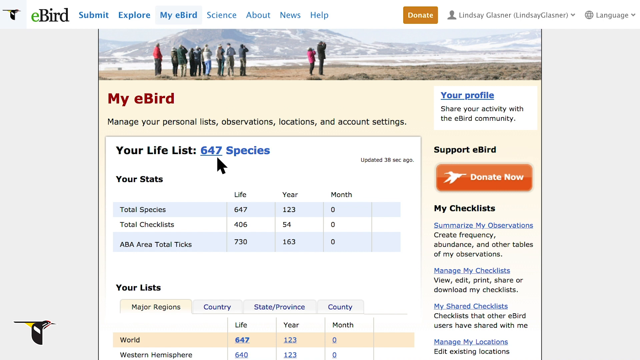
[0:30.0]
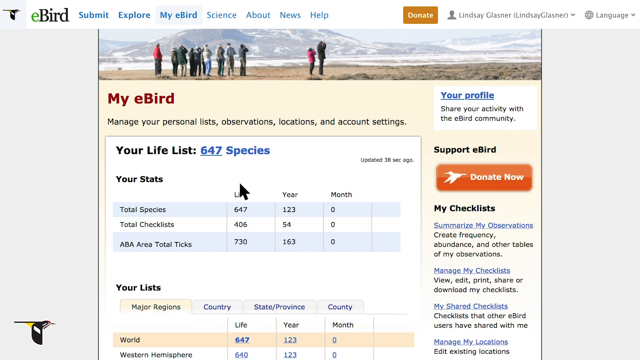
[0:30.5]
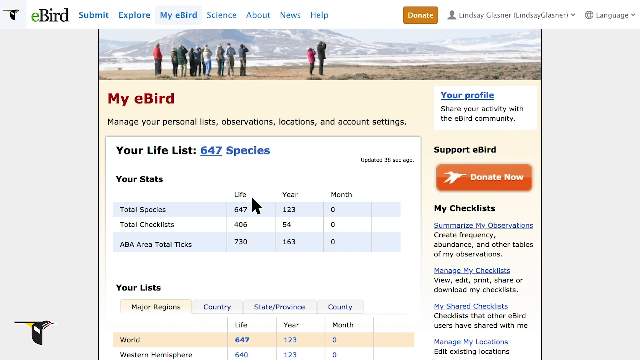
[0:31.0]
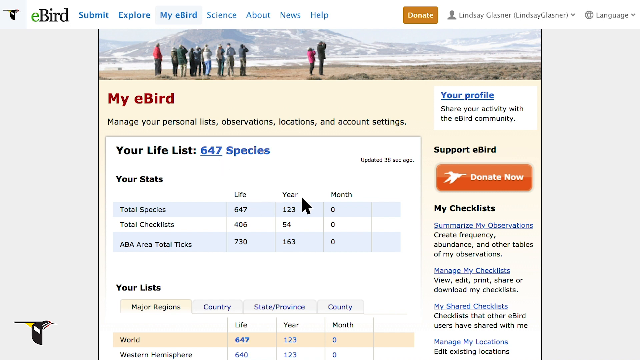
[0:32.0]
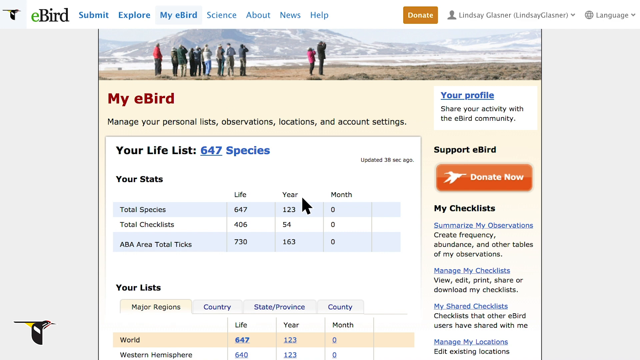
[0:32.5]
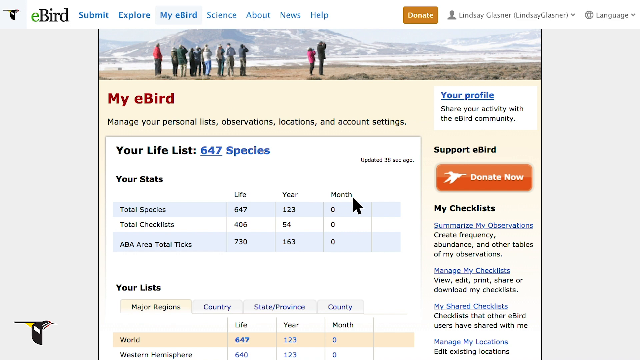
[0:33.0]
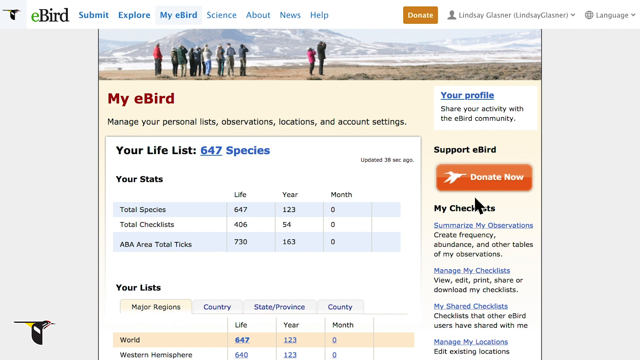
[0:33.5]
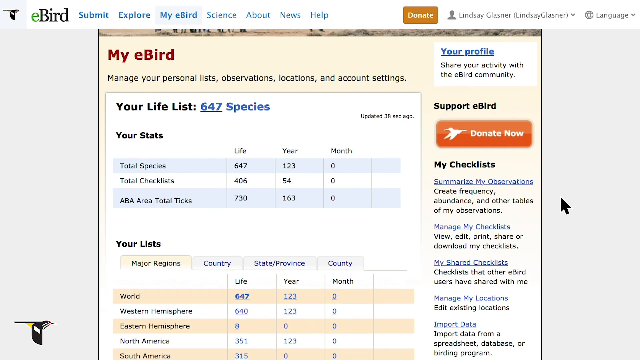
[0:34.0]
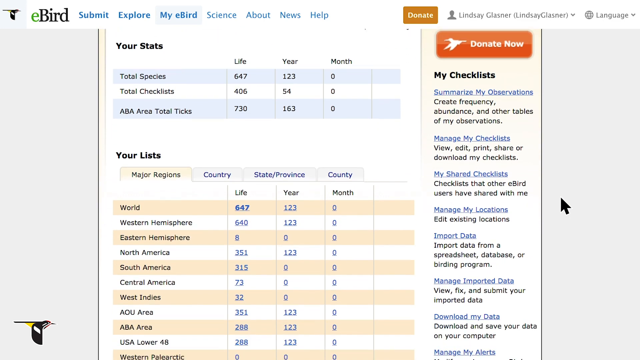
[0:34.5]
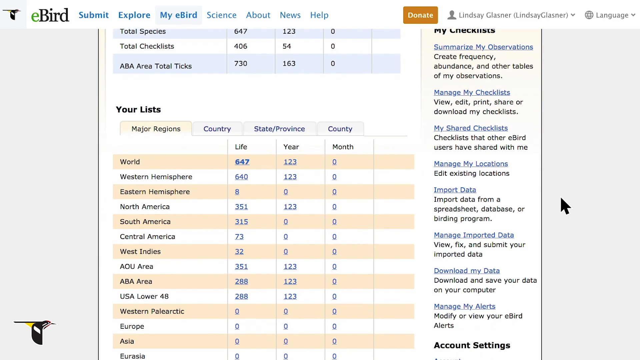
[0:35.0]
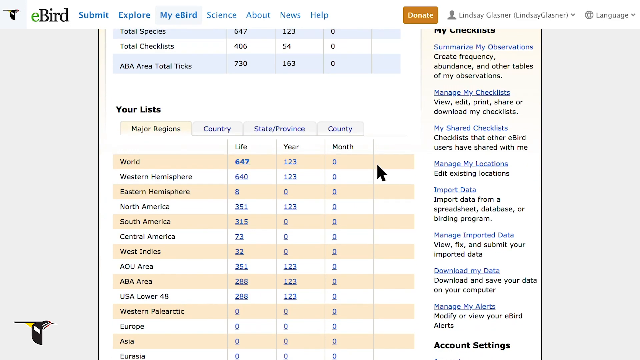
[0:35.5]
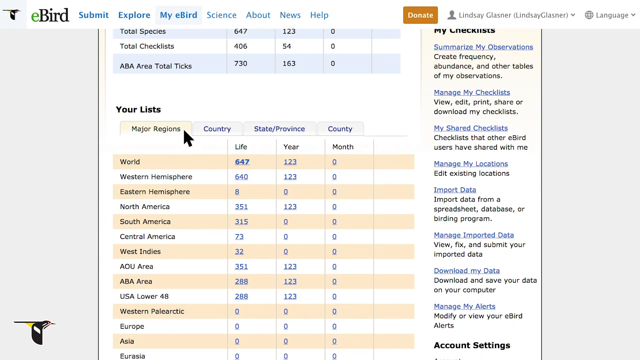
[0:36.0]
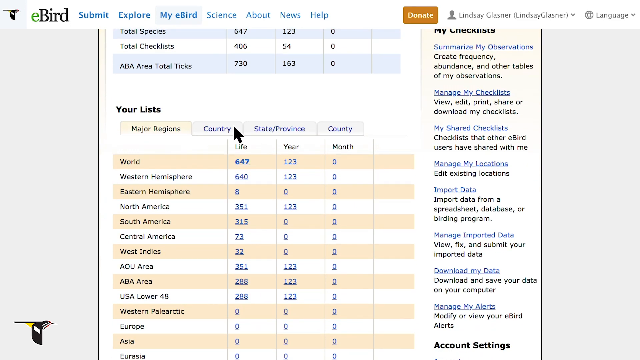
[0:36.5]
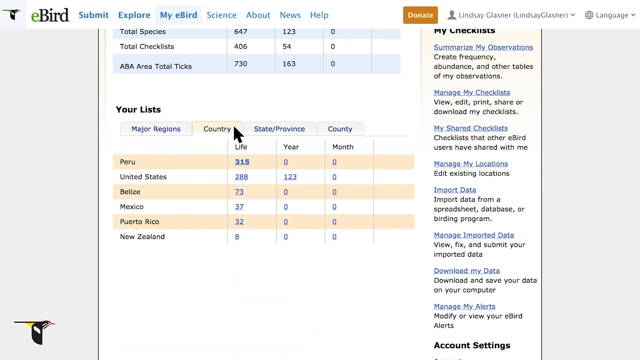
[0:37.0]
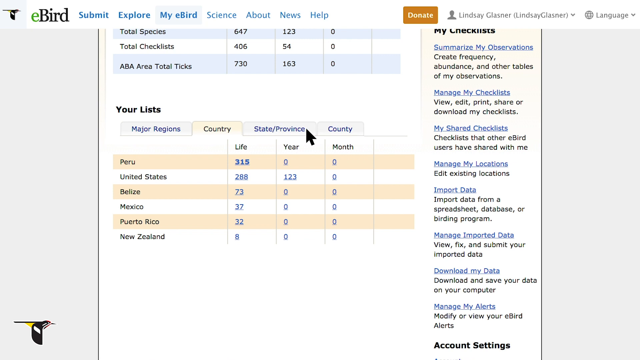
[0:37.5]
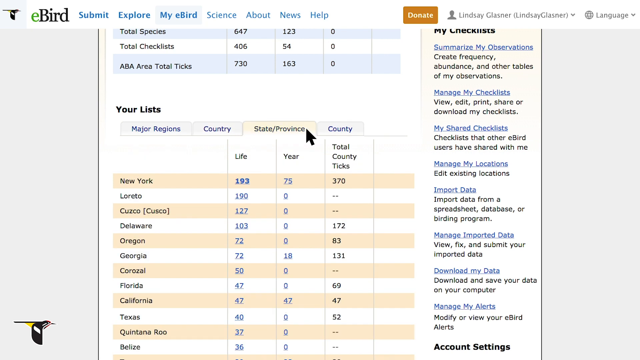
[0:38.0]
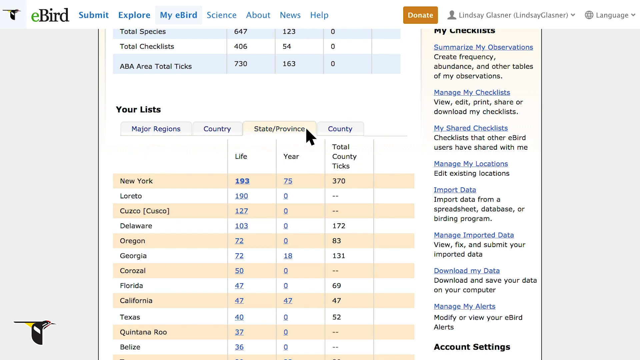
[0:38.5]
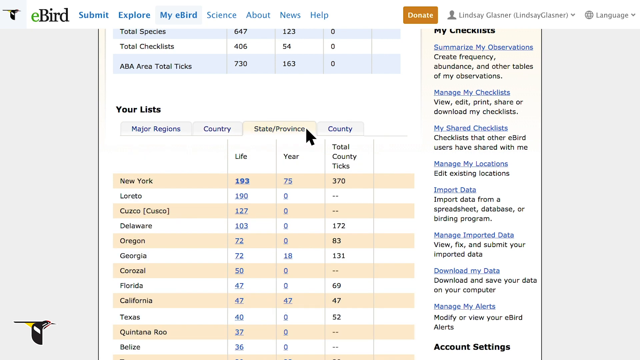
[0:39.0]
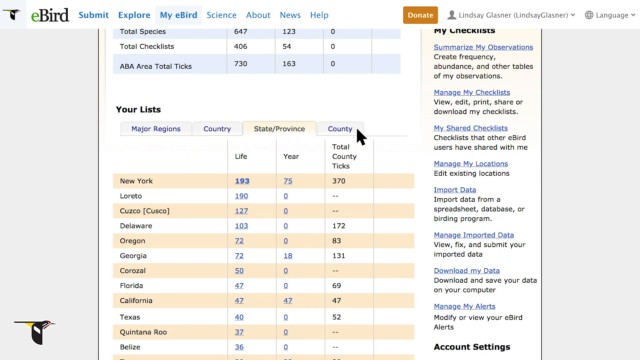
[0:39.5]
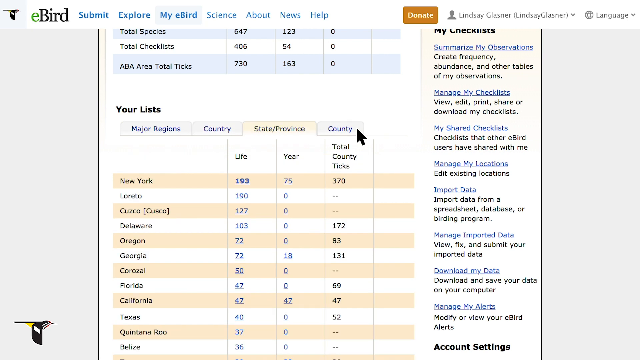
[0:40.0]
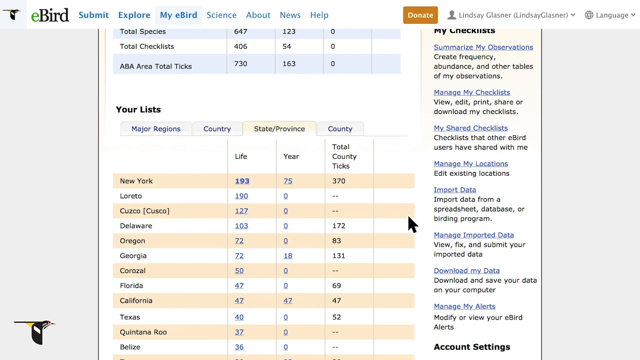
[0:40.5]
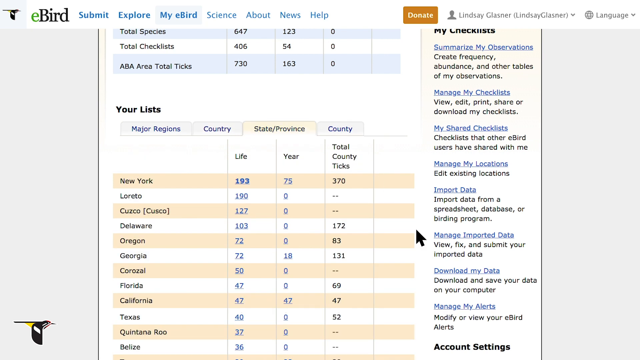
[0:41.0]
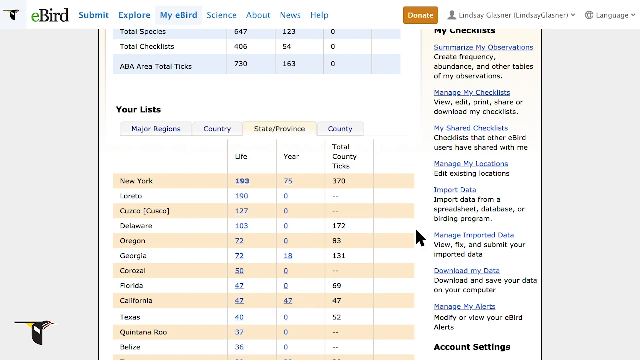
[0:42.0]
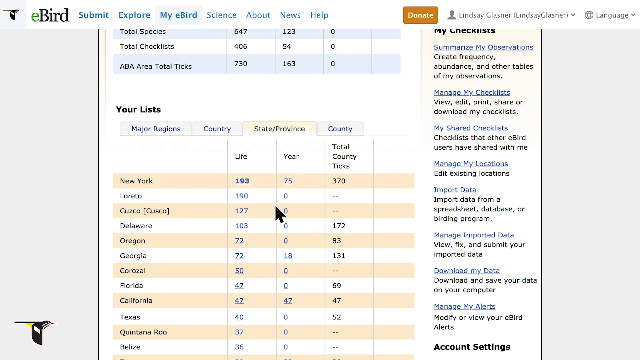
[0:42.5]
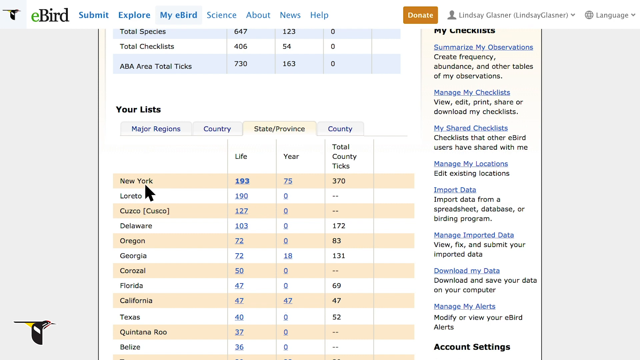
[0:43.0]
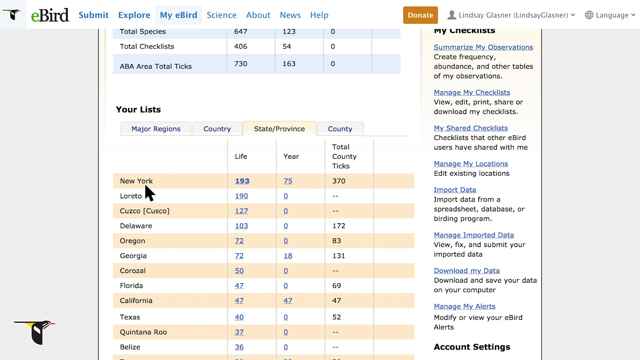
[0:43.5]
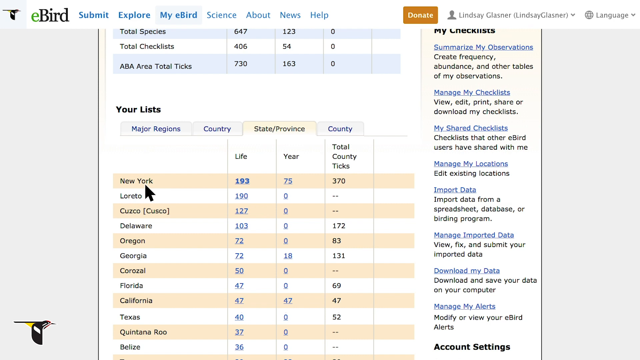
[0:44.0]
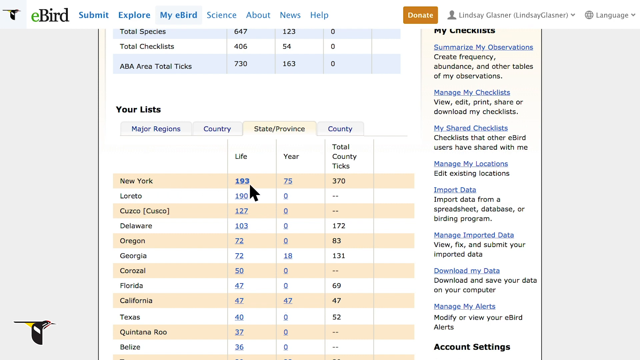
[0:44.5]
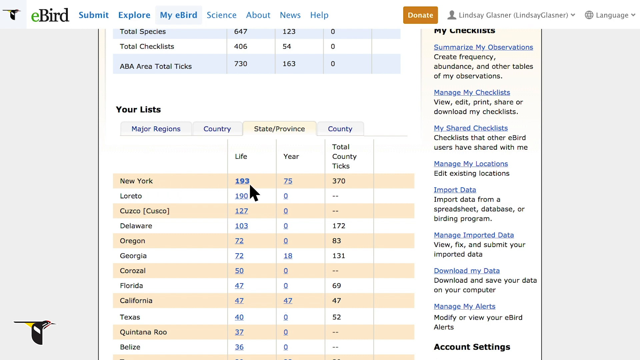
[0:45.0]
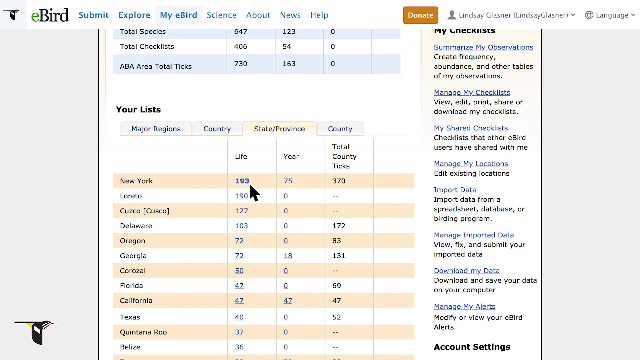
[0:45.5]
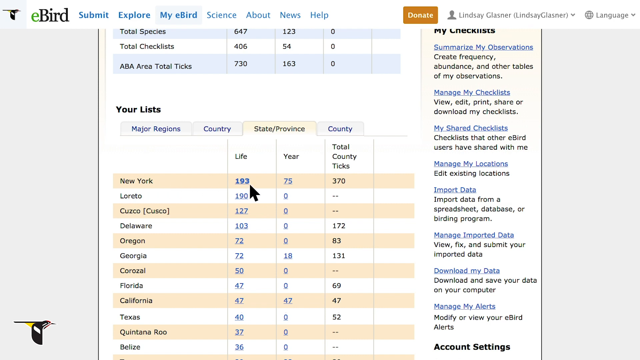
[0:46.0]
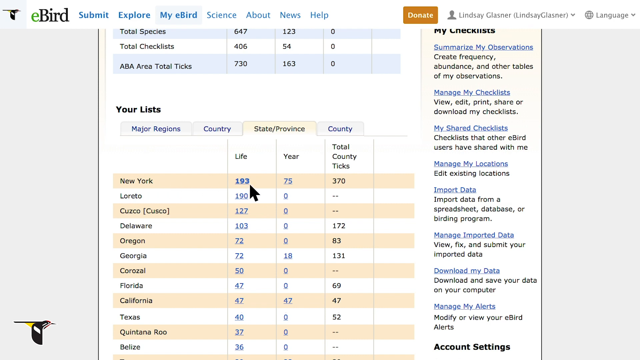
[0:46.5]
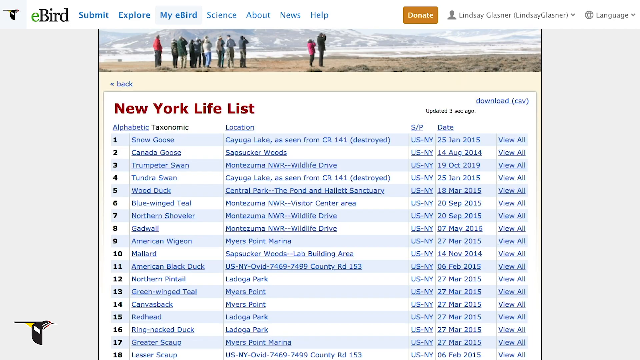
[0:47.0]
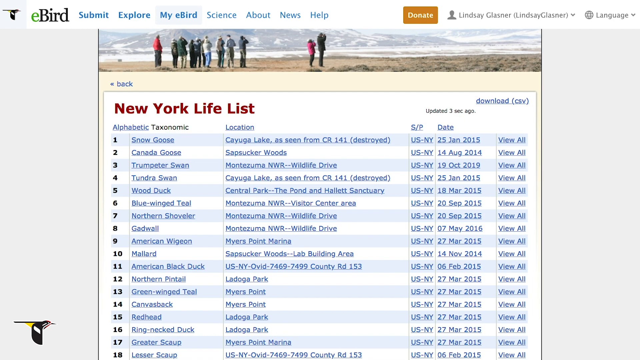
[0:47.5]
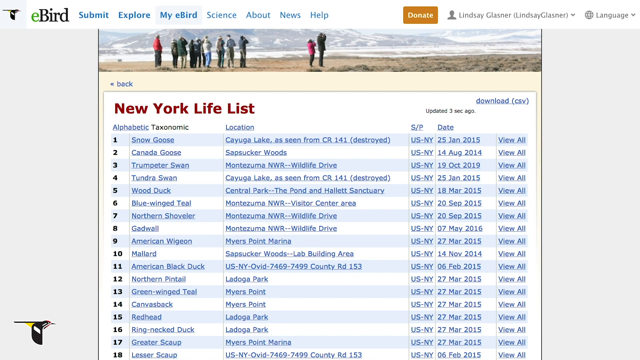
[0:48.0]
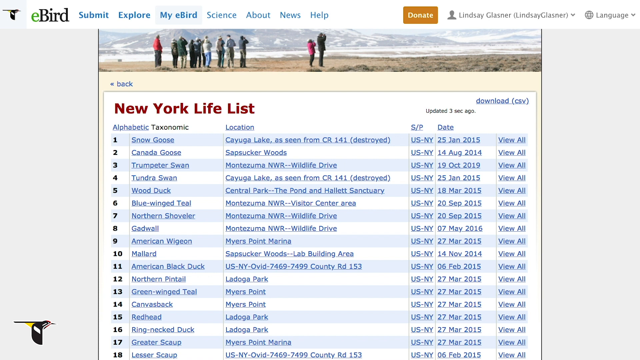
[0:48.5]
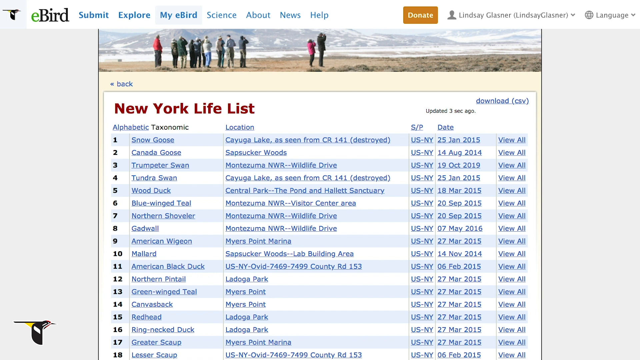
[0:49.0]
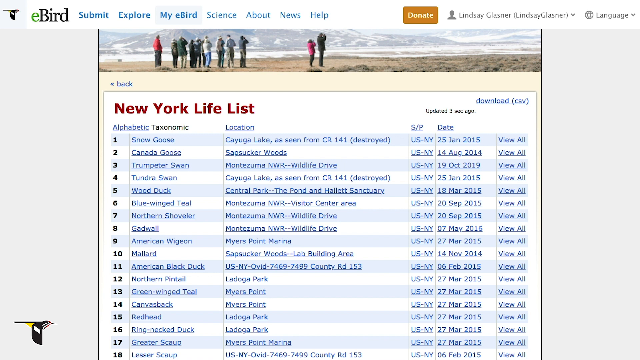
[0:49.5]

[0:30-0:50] In the section reading "your life list" in black, the blue text next to it reads "647 species." Below that is "your stats," with total species, total checklist in ABA area and total ticks listed down the left, and columns for life, year and month coming down on the right, matched up with the rows on the left; "my list" is at the bottom. The cursor moves to life, year and month, and the page scrolls down. Under "your lists," the top row reads major regions, country, state/province and county, with different sections of the world listed down the left side and life, year and month columns with numbers on the right. The cursor clicks on country, then on state/province, which changes the information. The page scrolls down a little, the cursor moves over New York and then left to 193 for life. The New York life list opens, numbered 1 through 17 down the left side, with columns for the name, location, SP and date, and a last column on the right reading "view all" all the way down.